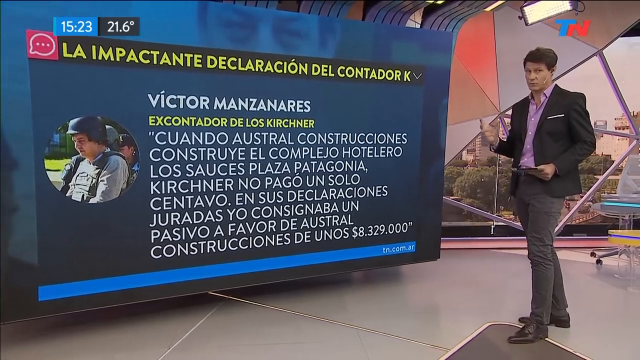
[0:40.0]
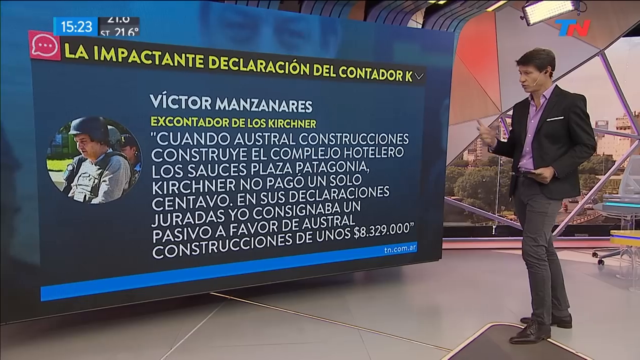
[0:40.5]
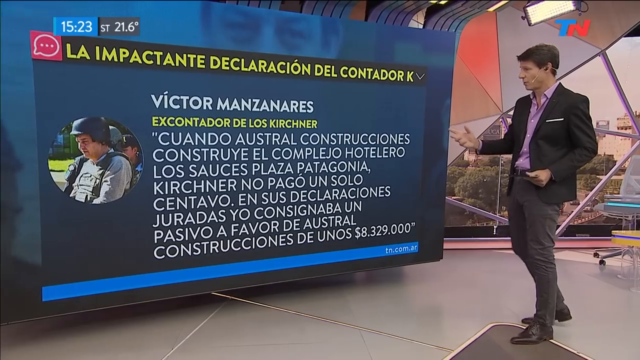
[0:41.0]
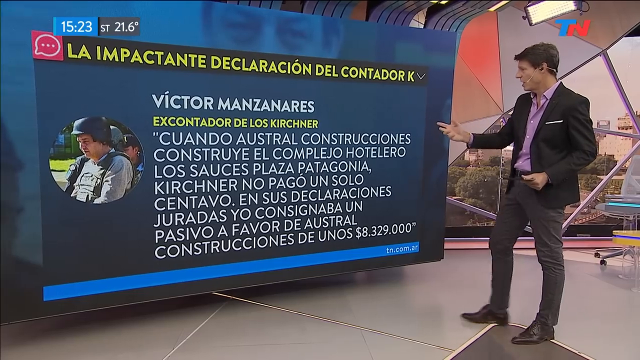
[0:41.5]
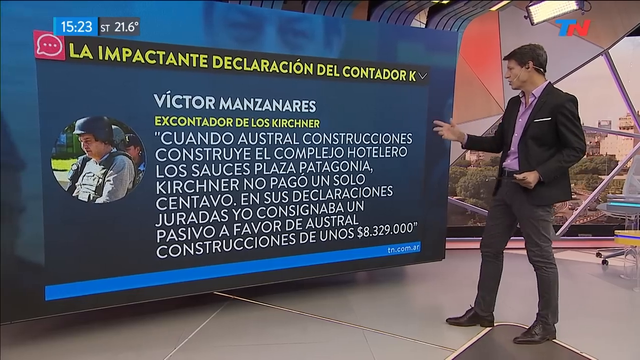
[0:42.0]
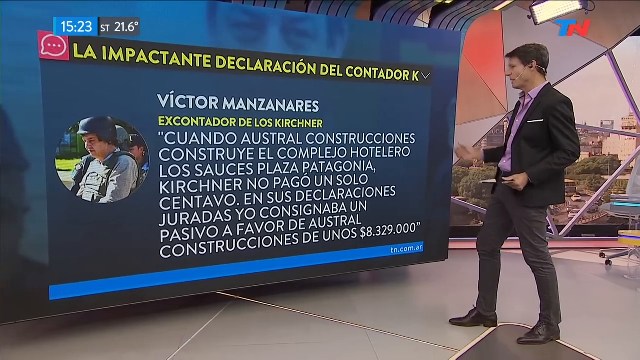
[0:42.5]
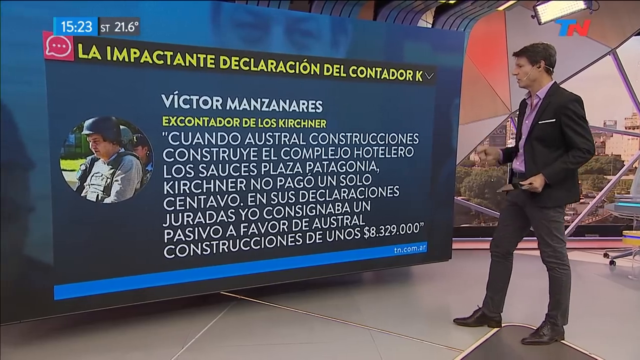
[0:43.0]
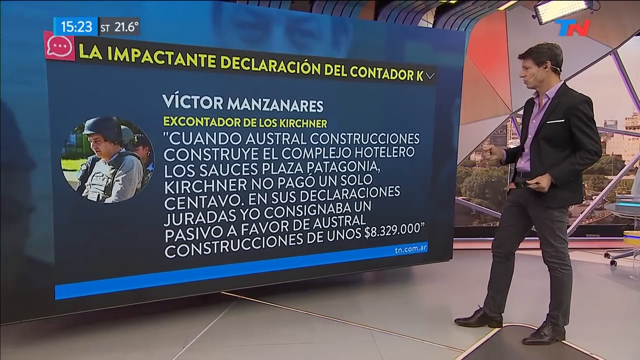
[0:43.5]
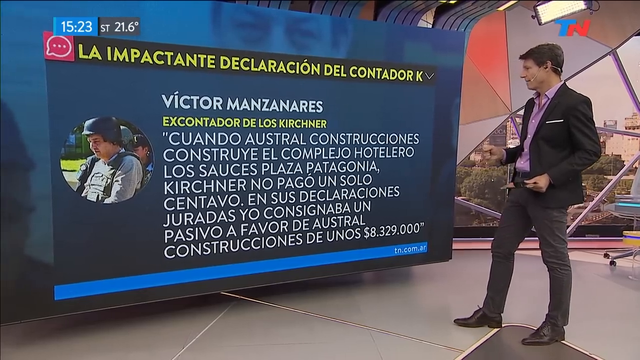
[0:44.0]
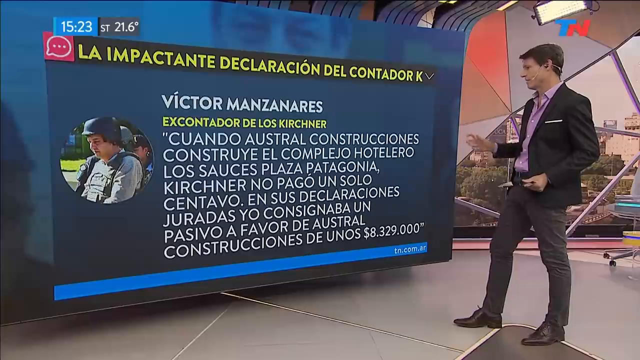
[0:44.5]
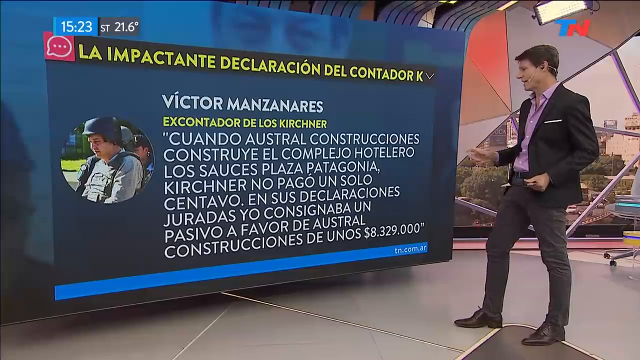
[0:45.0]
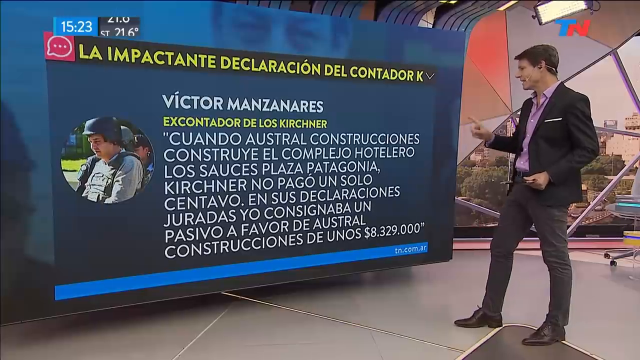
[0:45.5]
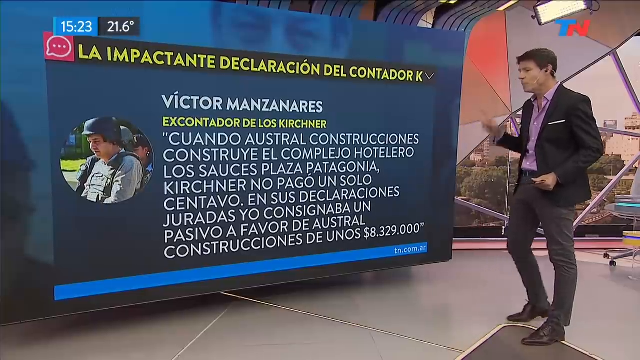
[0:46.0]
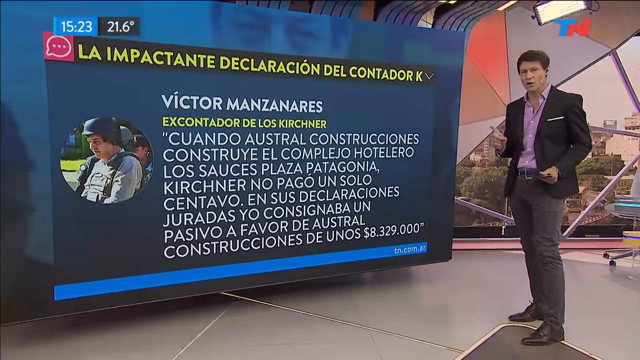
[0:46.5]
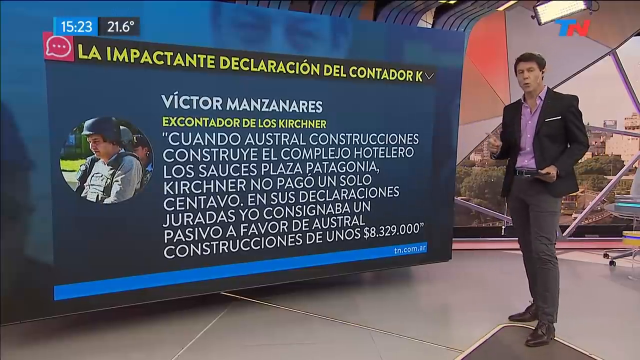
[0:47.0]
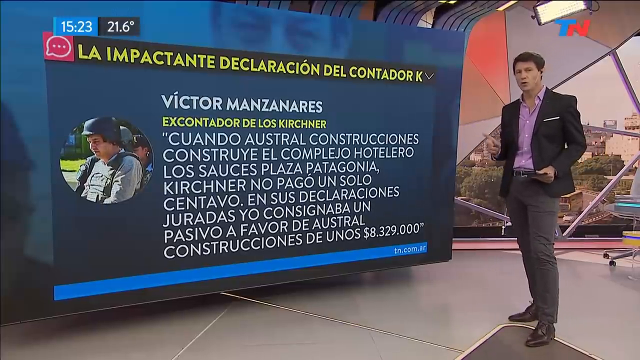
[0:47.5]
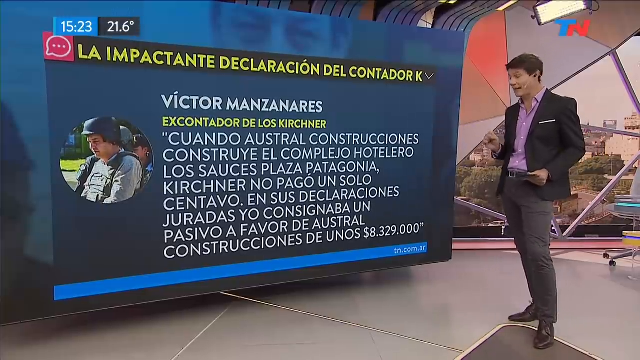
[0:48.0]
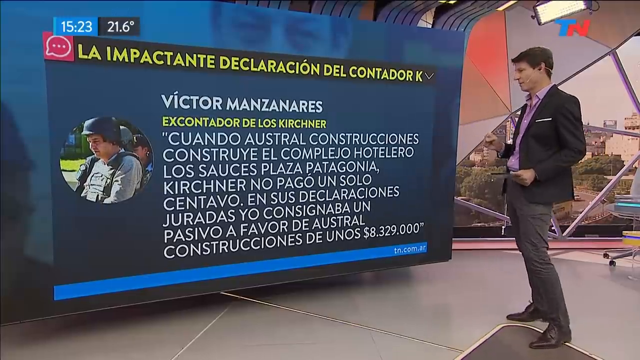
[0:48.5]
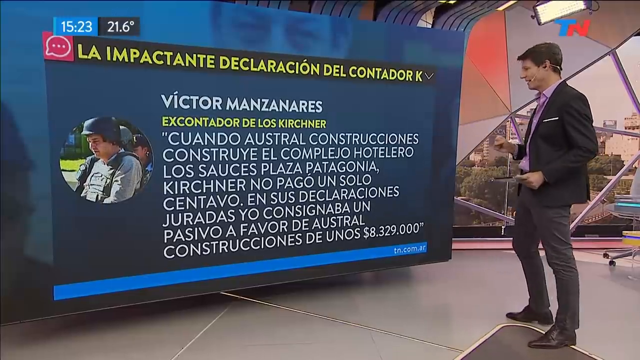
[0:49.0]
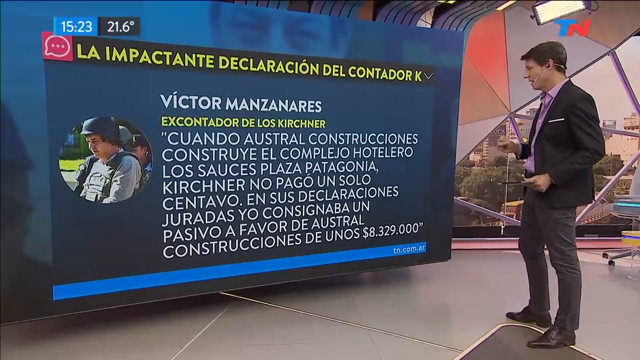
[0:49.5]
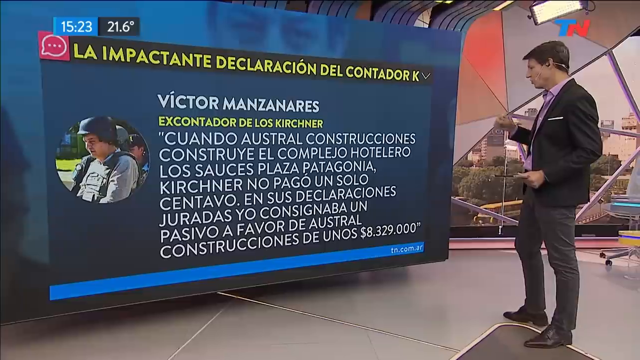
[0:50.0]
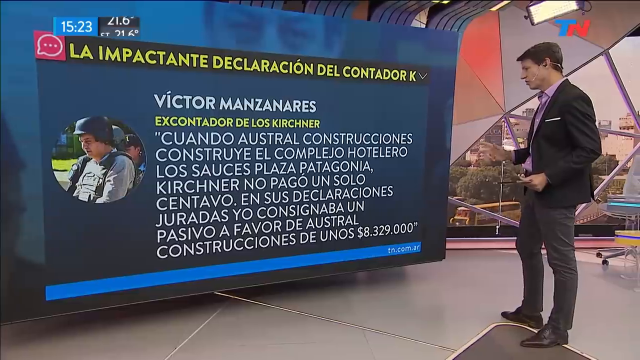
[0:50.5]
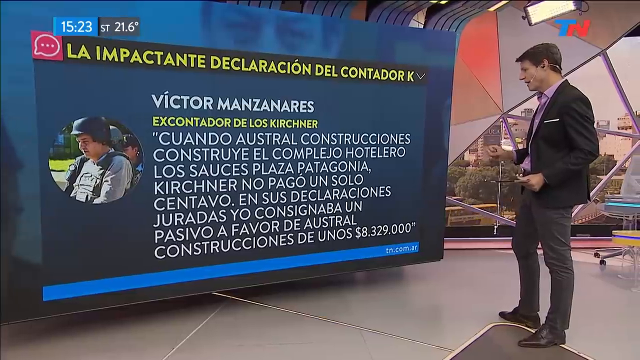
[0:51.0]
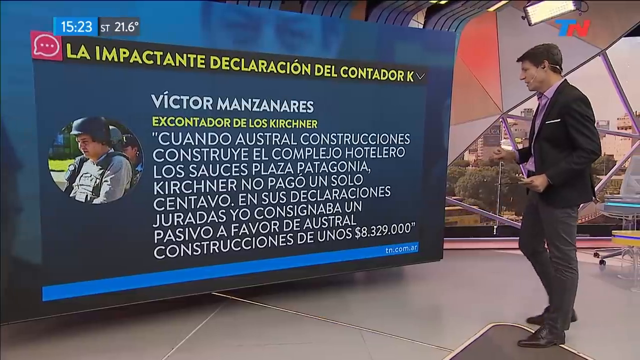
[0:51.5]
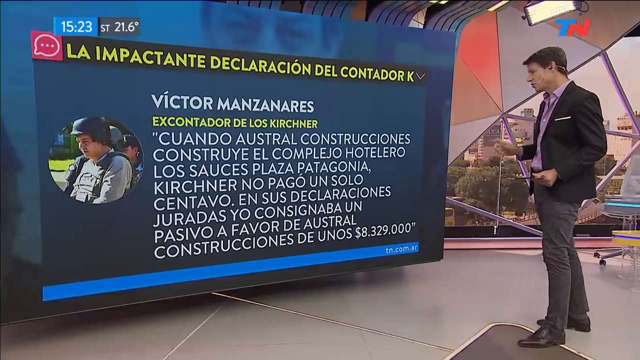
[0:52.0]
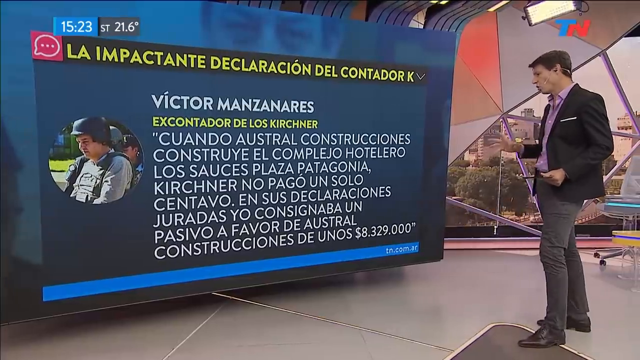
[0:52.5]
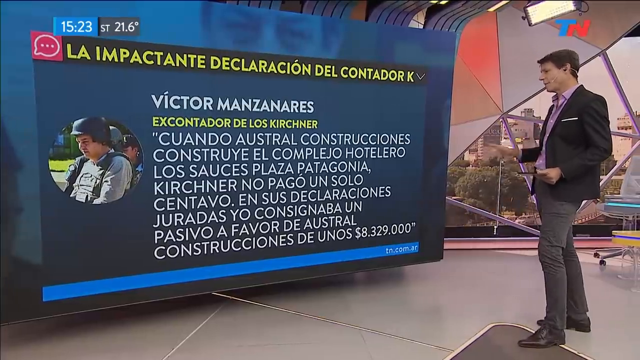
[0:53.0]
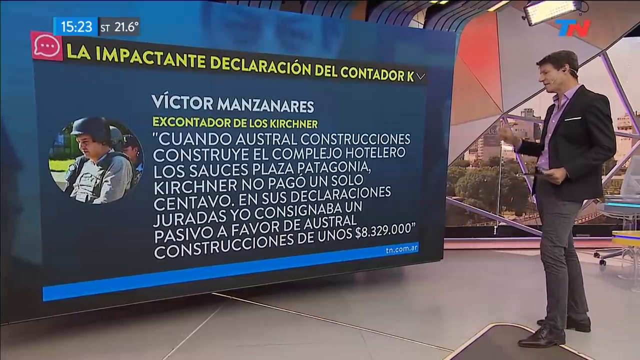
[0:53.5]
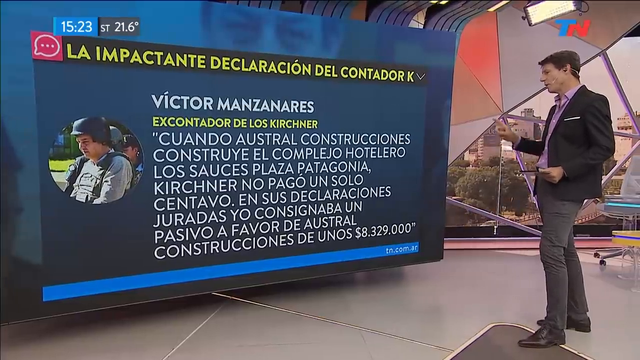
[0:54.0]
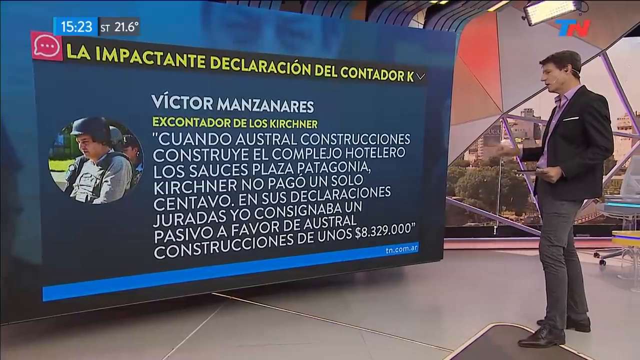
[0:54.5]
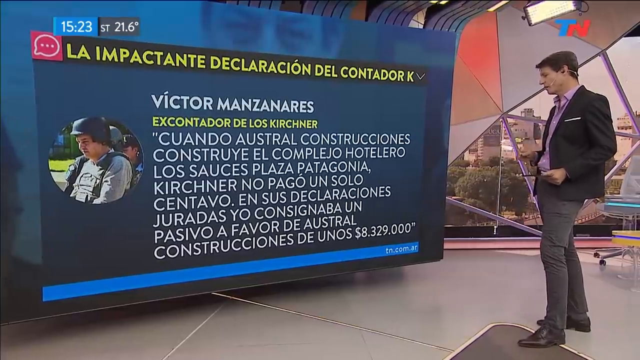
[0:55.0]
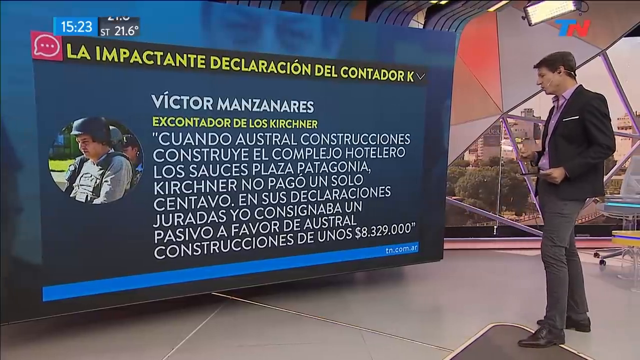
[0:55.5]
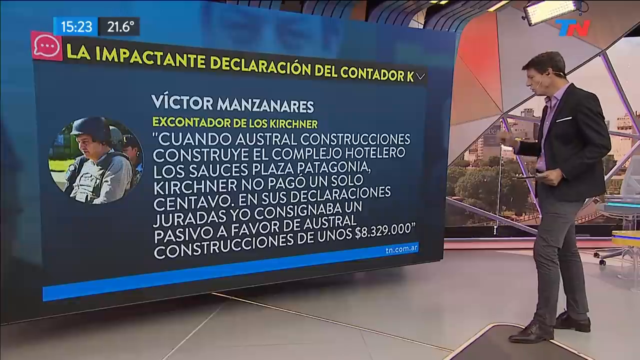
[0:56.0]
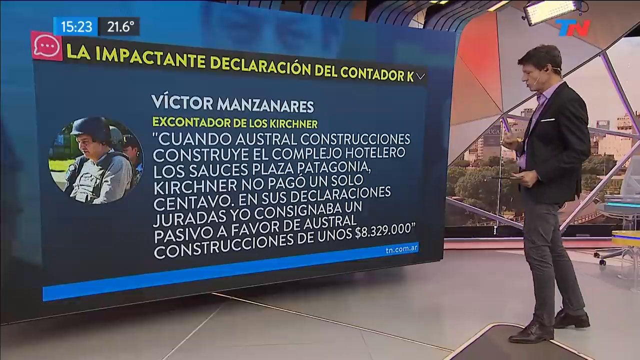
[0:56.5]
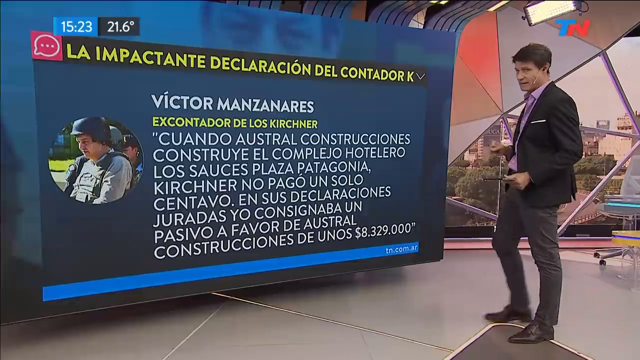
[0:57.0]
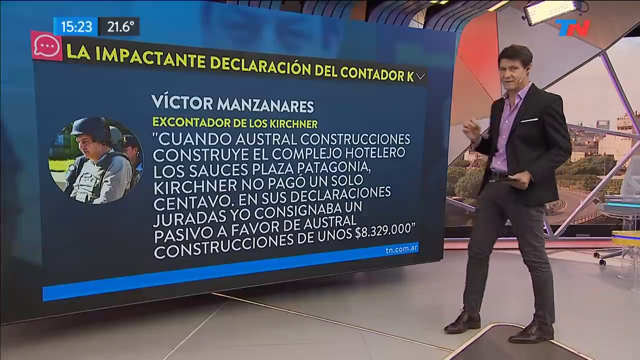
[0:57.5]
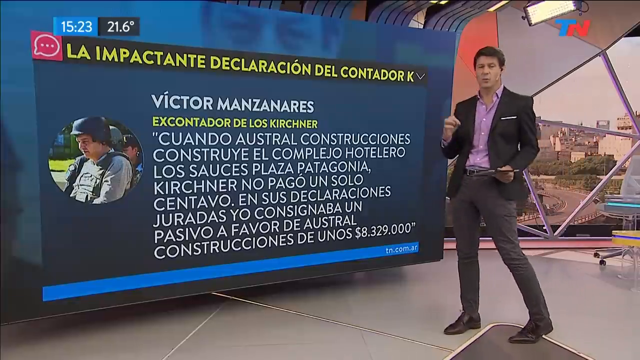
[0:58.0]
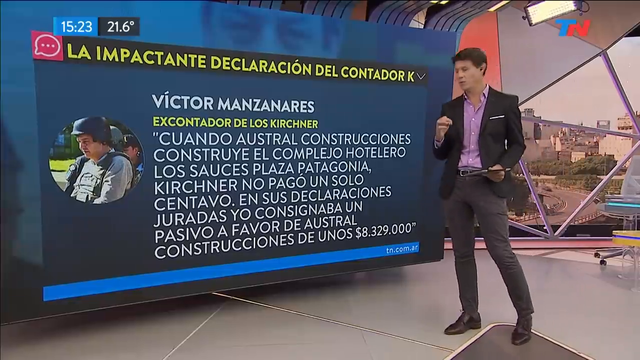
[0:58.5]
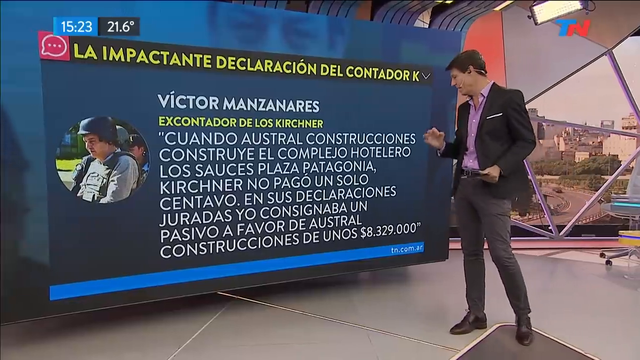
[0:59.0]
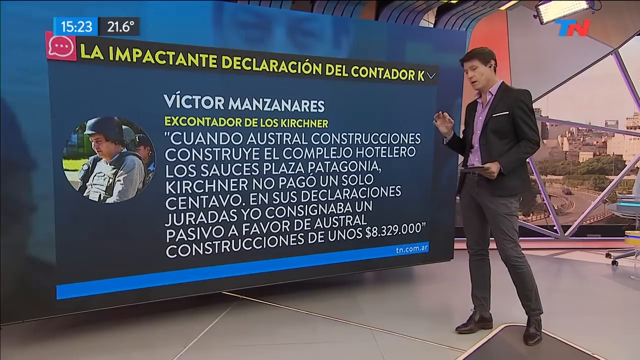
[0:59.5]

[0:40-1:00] The same man looks at the monitor, using his right hand a lot: at one point his pointer finger is out, then his hand is in something like a fist, moving up and down continuously. He seems to look at the camera and then back at the video screen once or twice. Most or all of the text is in another language that looks to be Spanish. A black border runs across the top of the monitor with yellow text. Beneath it is a quote of some sort, with a circle on the left side containing a photo of someone. At the bottom is a blue banner, and in the lower right there is some white text too small to make out.